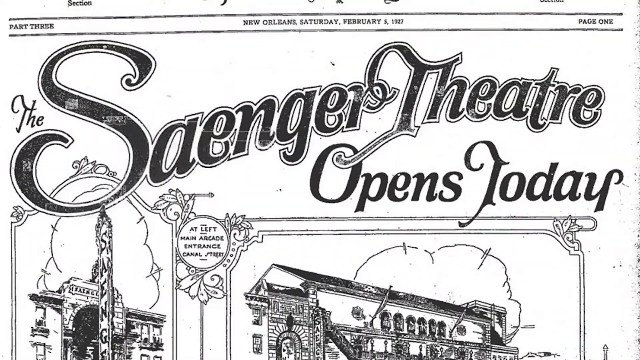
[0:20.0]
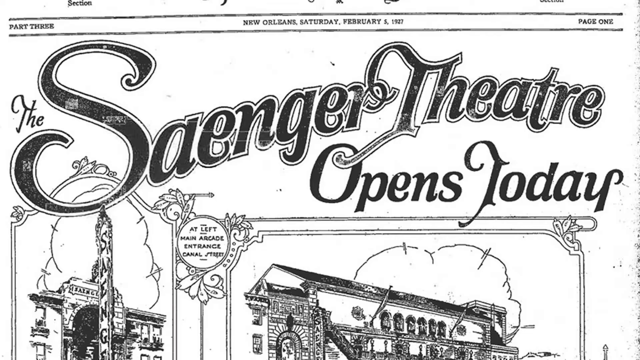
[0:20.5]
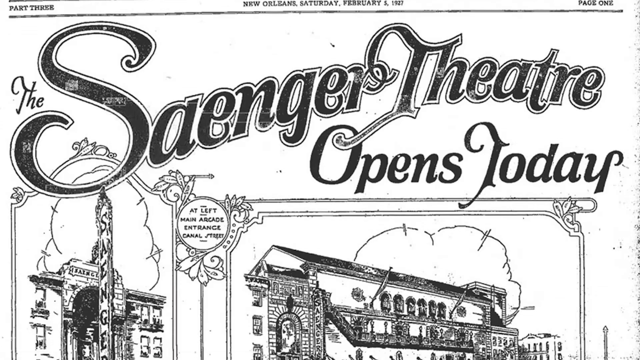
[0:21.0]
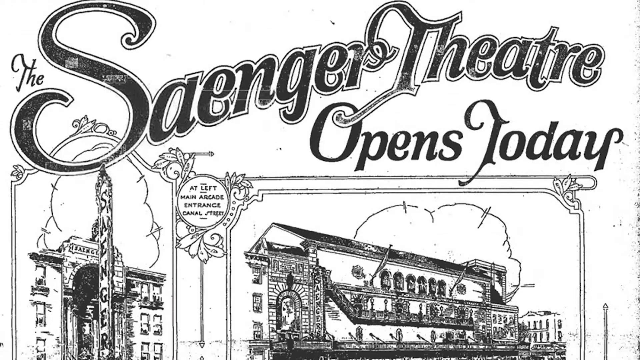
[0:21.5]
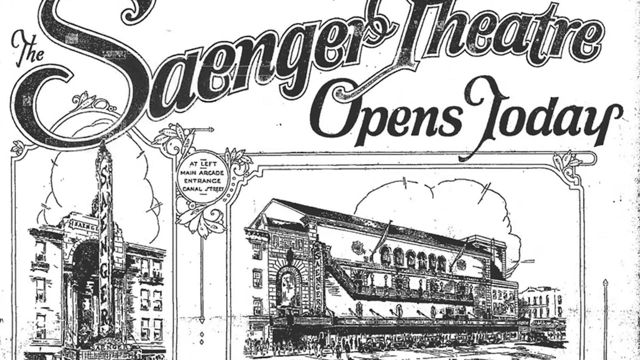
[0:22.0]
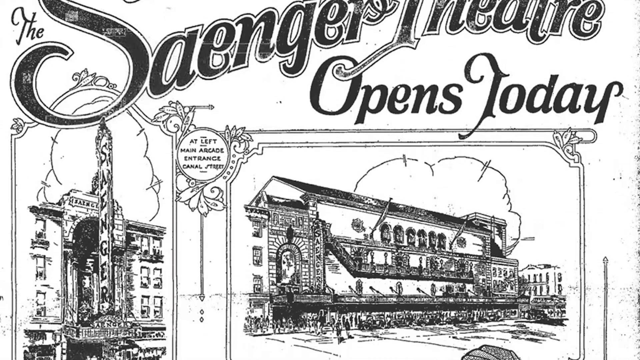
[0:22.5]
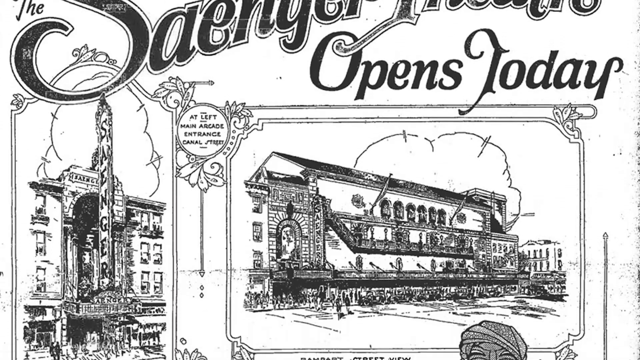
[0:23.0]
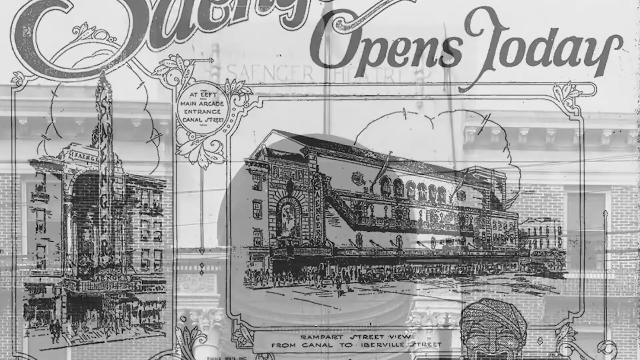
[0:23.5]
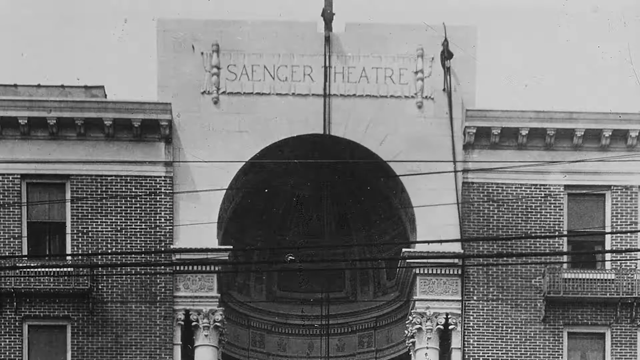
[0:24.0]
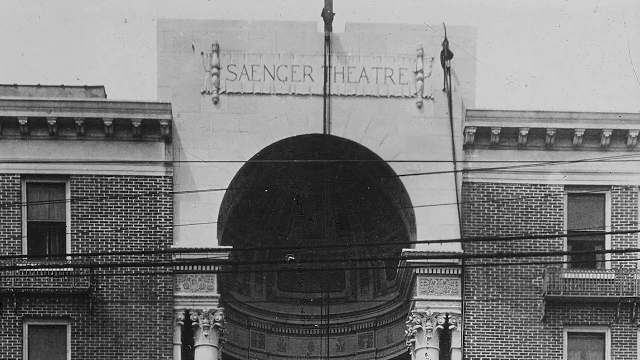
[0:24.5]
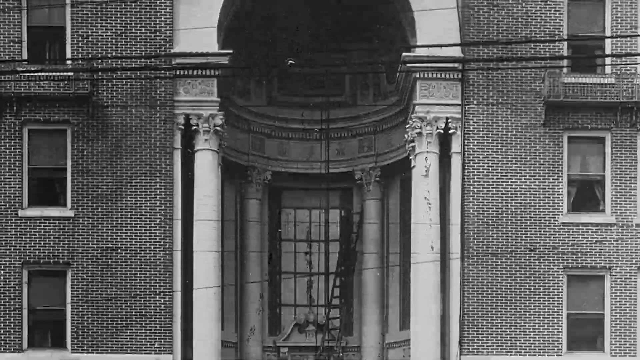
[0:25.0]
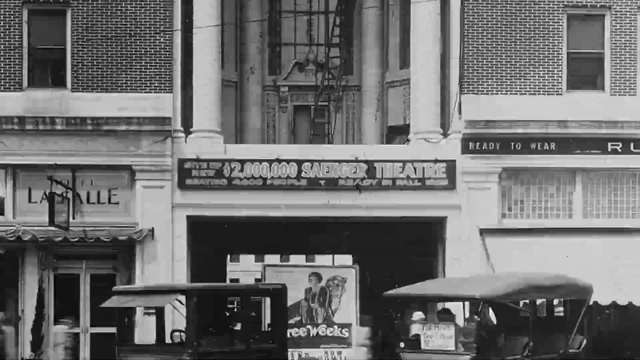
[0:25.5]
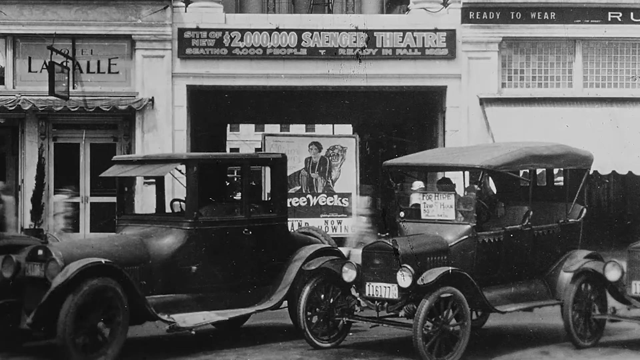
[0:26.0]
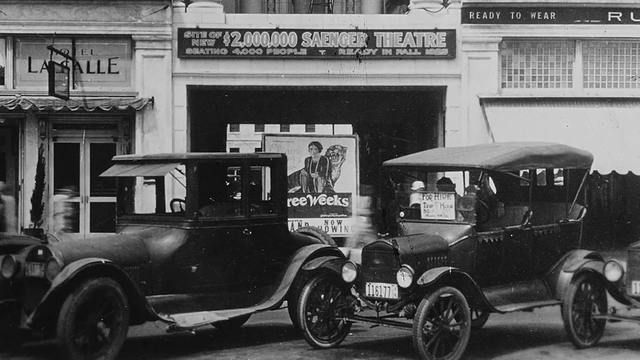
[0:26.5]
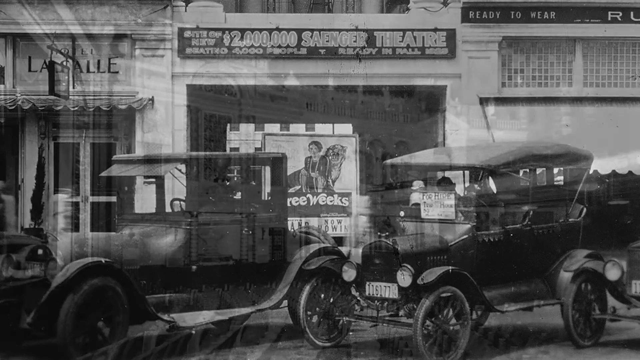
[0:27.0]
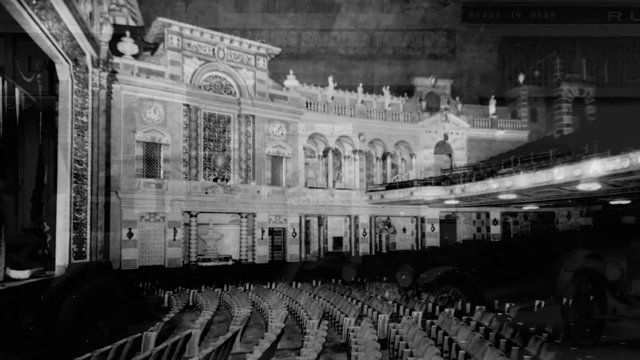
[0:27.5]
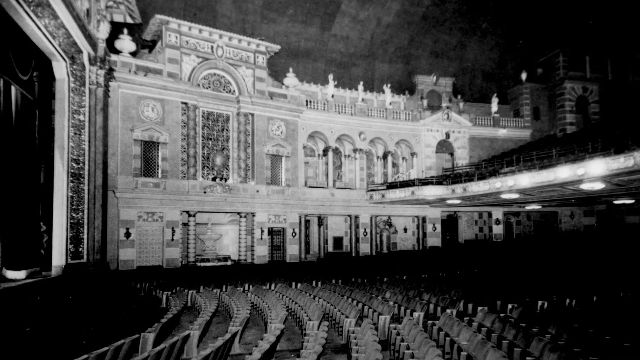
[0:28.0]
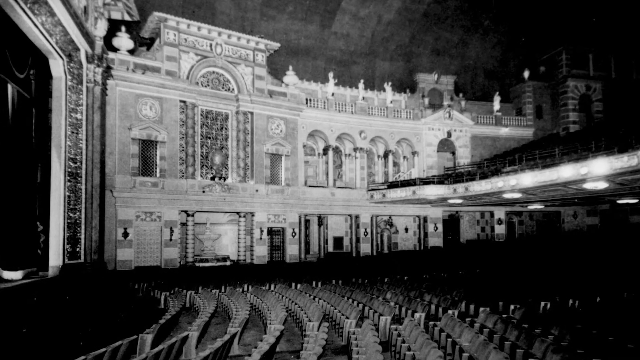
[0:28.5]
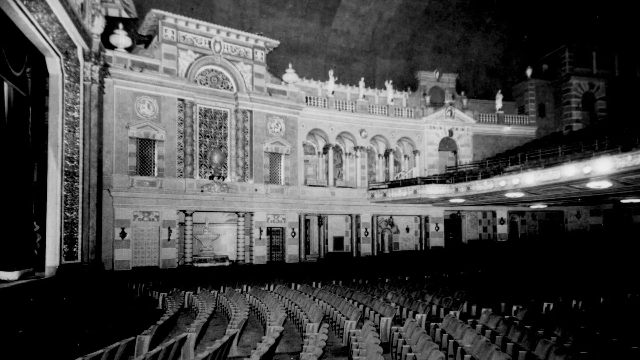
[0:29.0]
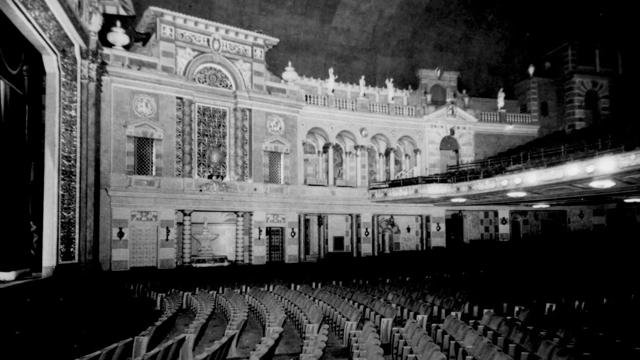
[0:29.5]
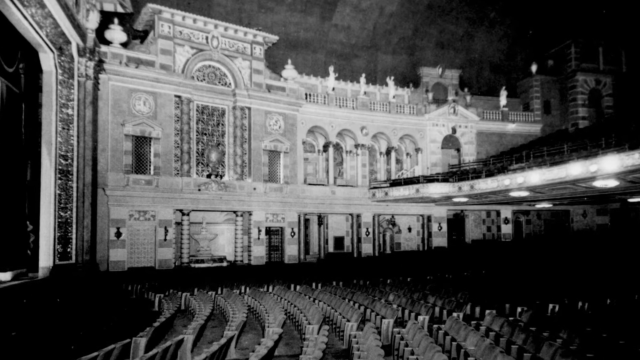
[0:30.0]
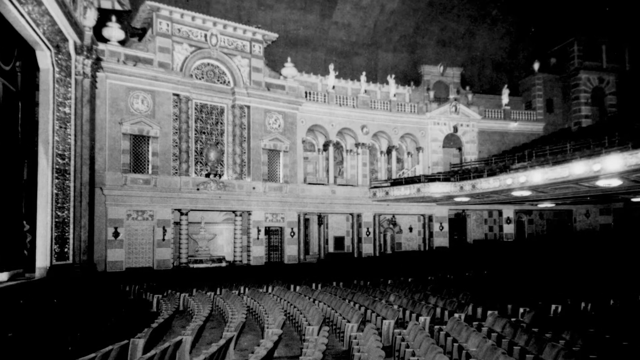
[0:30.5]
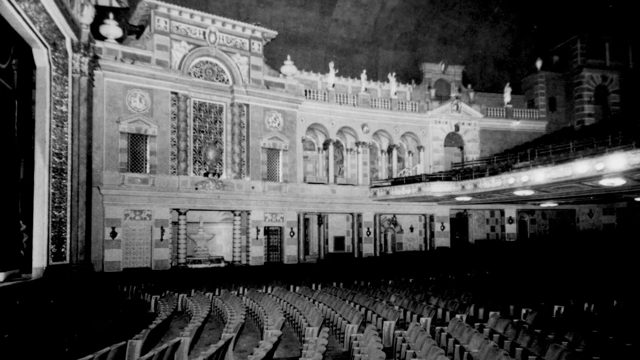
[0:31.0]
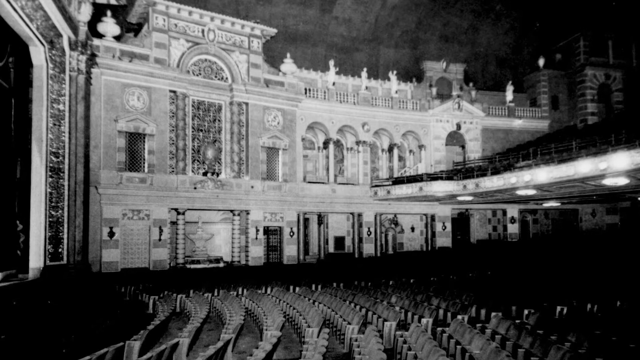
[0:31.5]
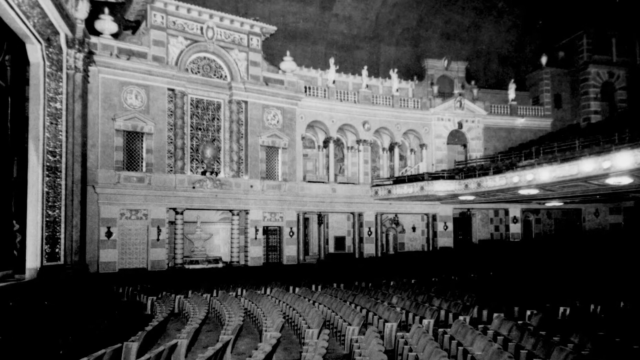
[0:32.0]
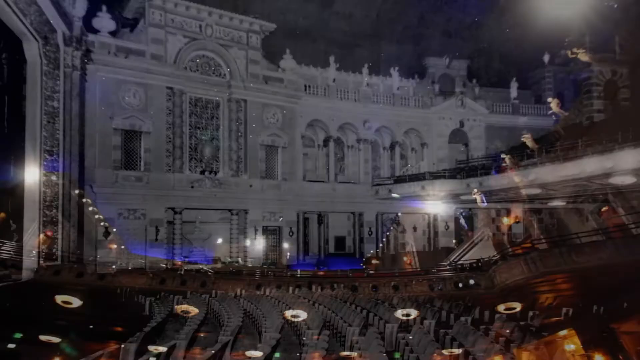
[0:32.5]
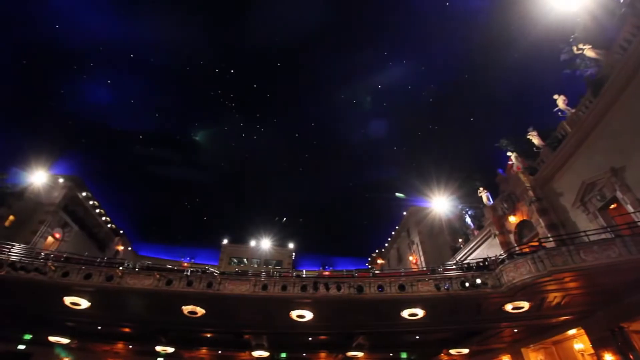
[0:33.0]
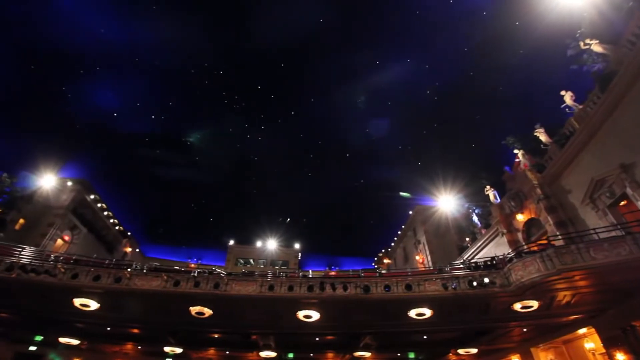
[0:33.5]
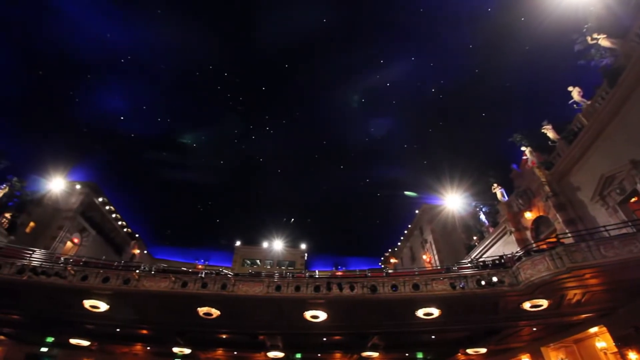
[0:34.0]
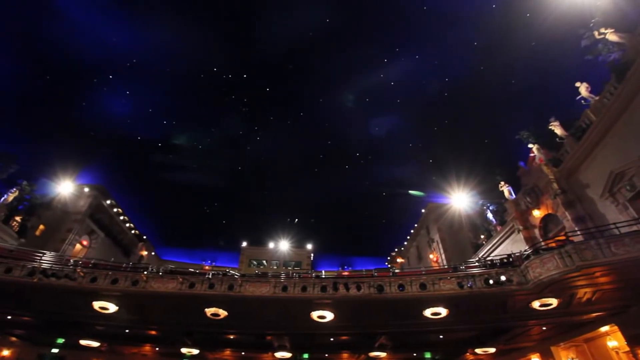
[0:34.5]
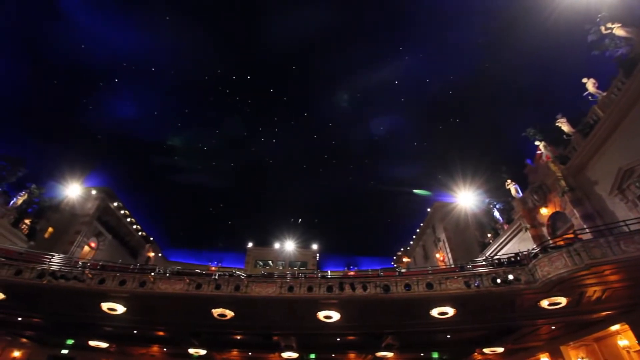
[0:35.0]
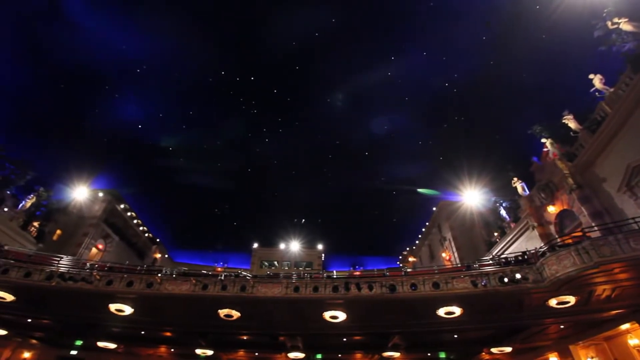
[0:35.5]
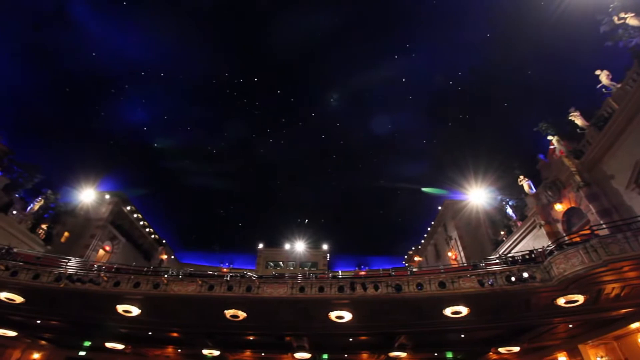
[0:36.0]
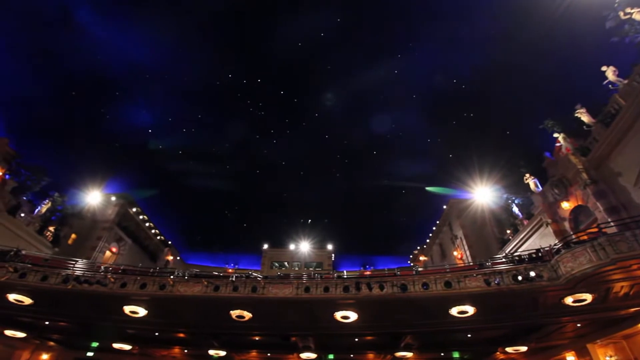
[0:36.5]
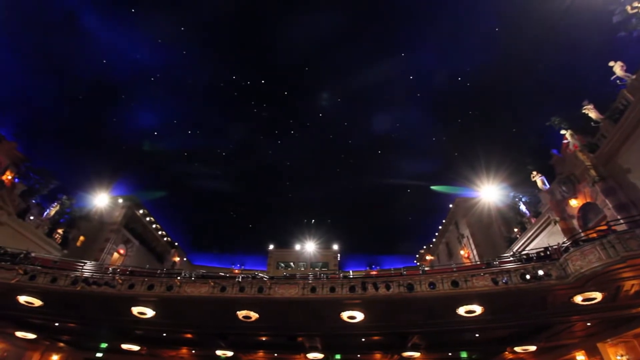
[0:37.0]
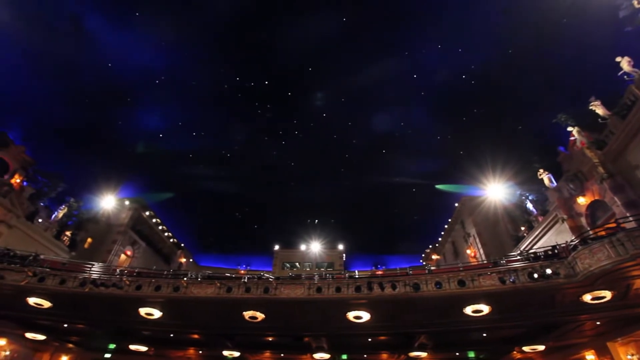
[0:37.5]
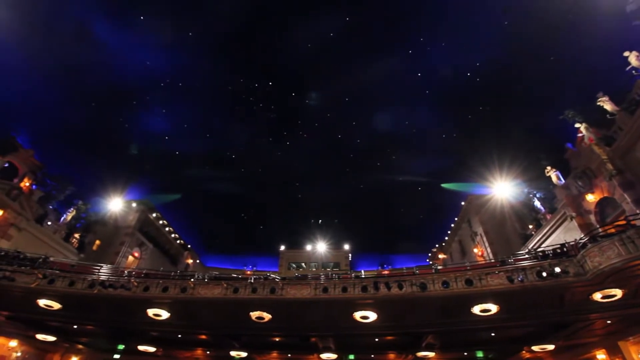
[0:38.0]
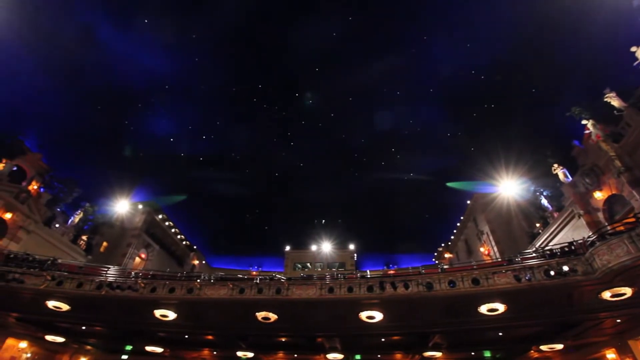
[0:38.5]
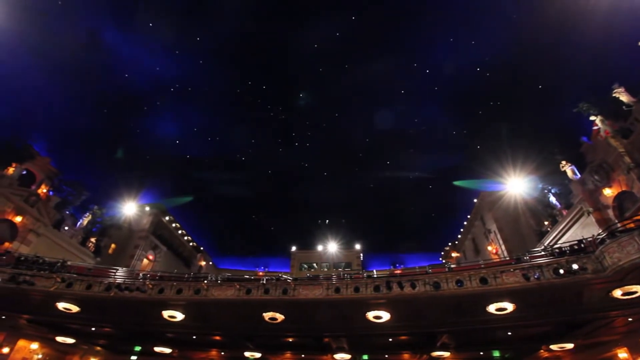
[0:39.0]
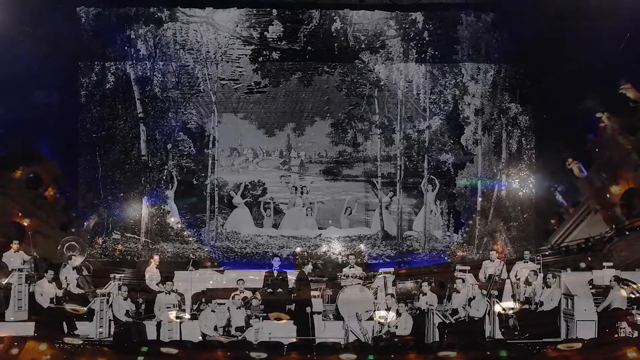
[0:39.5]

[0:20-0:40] A black-and-white drawing has "part three New Orleans Saturday February 5, 1927 page one" on top, with "the Saenger Theater" and "opens today" written on it, along with "at left main arcade entrance" and a picture of what looks like a house. The view scrolls down to another drawing, this one of the outside of the actual Saenger theater, with two black cars outside and the text "two million dollars Saenger theater" along with the poster at the door. More of the theater follows, including the inside, which looks like a beautiful castle. The next scene is filmed from the bottom going up, showing blue lights and a dark blue sky with stars.